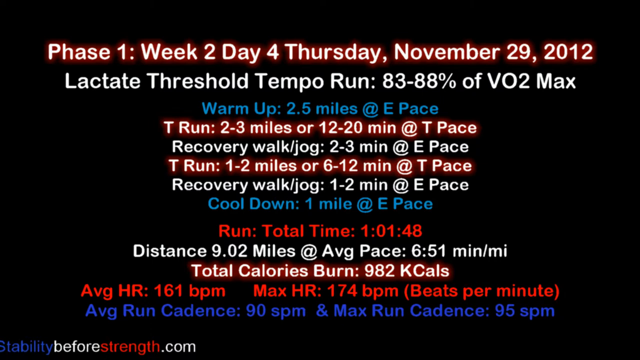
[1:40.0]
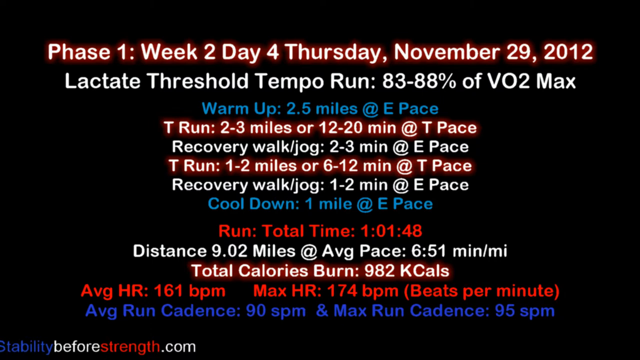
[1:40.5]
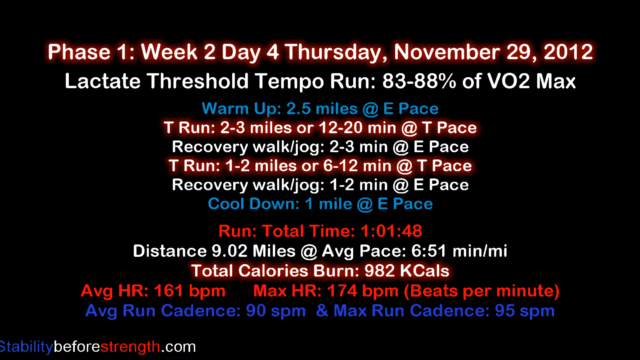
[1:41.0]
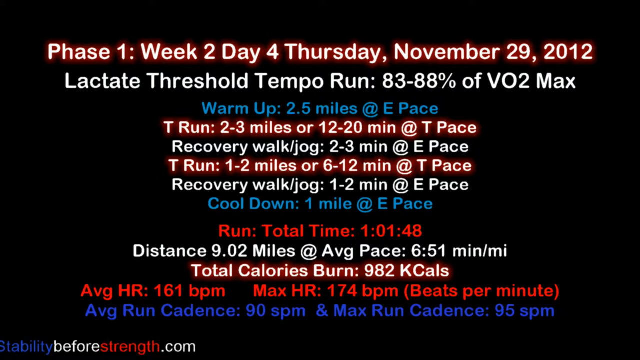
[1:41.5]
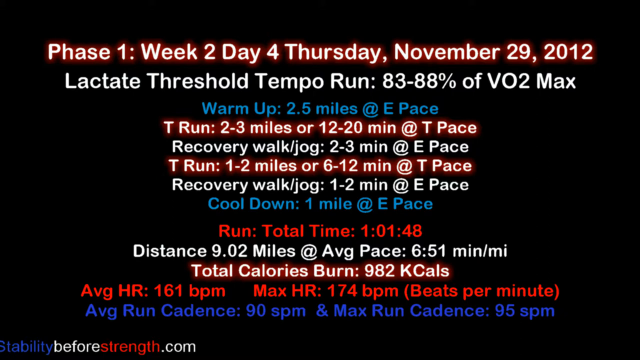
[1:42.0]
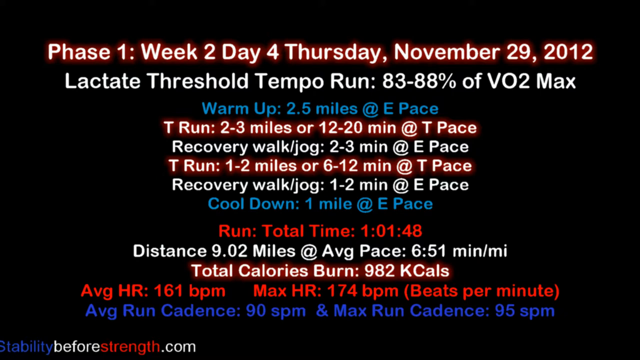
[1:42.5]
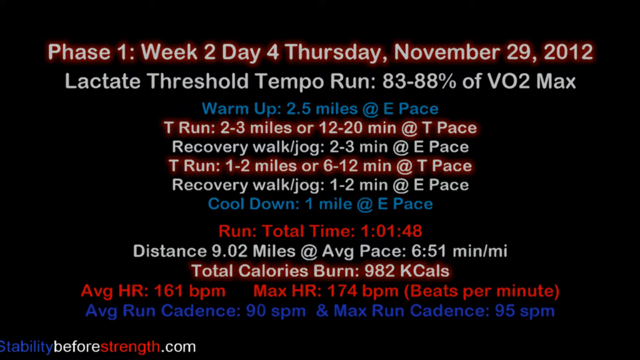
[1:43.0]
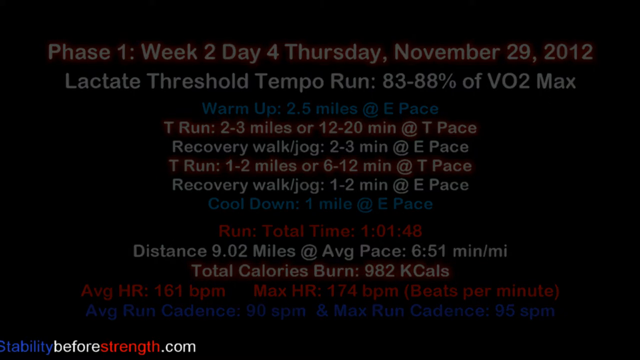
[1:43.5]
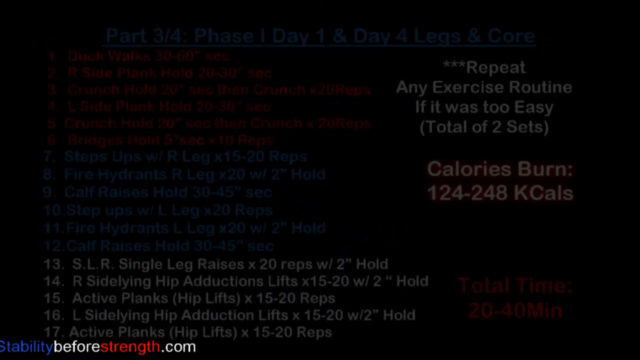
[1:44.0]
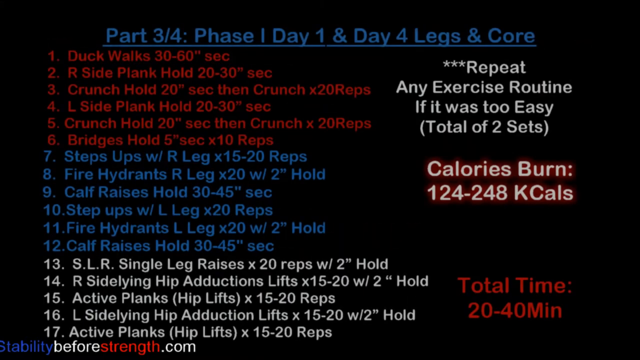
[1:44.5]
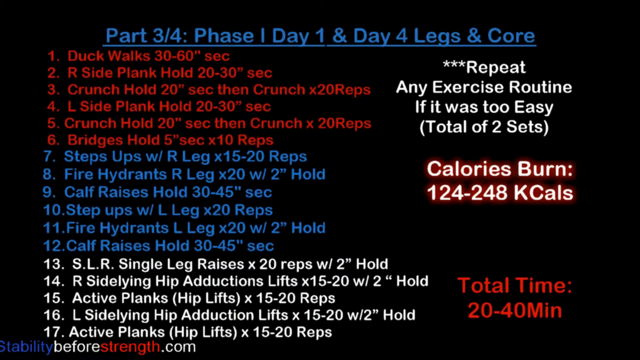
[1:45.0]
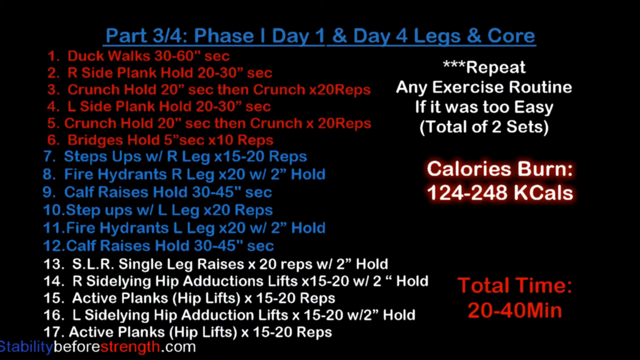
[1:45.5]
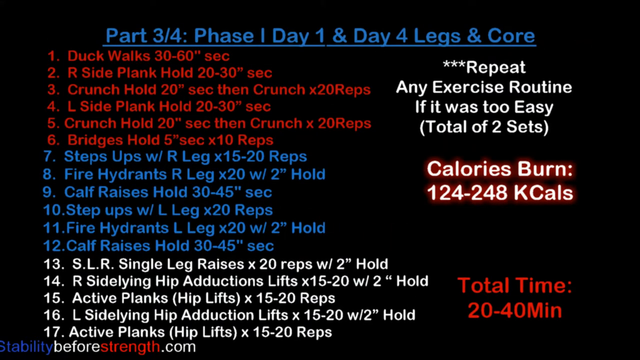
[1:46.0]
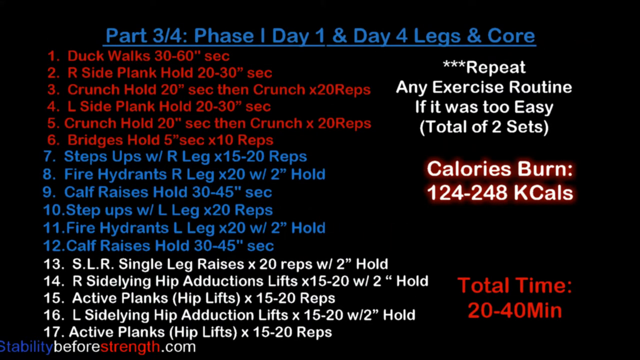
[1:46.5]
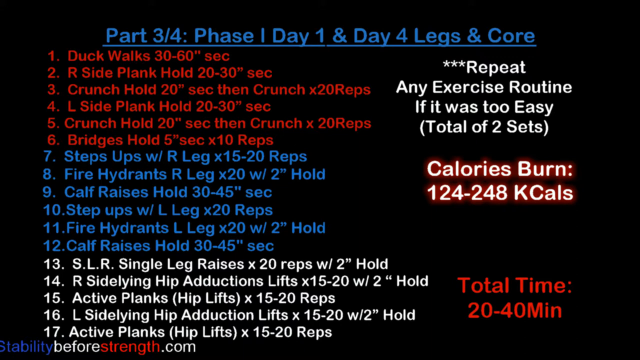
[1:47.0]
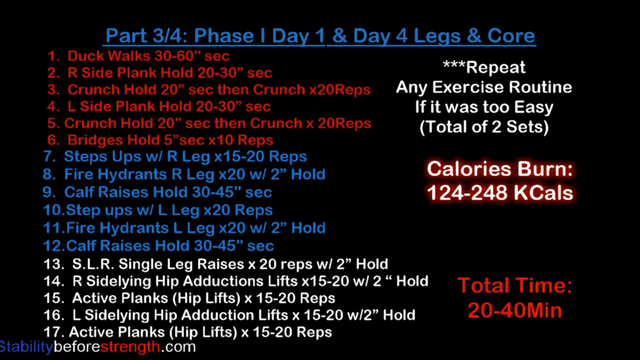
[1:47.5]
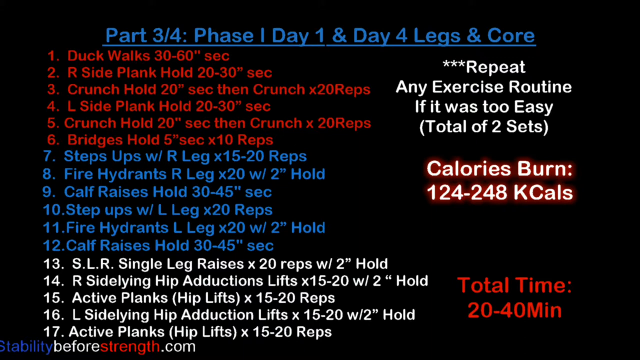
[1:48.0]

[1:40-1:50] The screen fades out to another black screen reading "Part three of four, Phase one, day one and day four, legs and core". In the top right are three asterisks and the text "repeat any exercise routine if it was too easy, total of two sets". Under this, white writing with a red glow says "calorie burn 124 to 248 calories". A list numbered 1 to 17 runs down the page: 1 to 6 in red lettering, 7 to 12 in light blue lettering and 13 to 17 in white. In the bottom left is the same website, stabilitybeforestrength.com, as on the previous screen. In the bottom right, in red lettering bigger than the rest of the text, it says "total time 20 to 40 minutes".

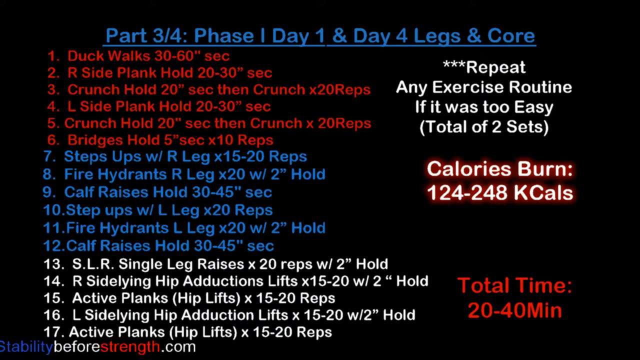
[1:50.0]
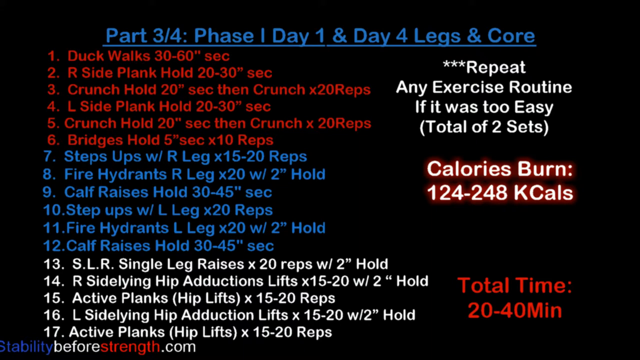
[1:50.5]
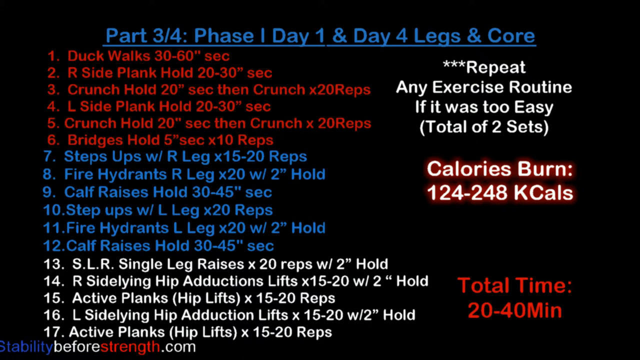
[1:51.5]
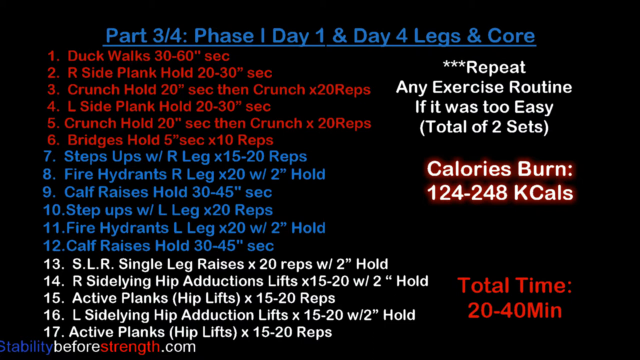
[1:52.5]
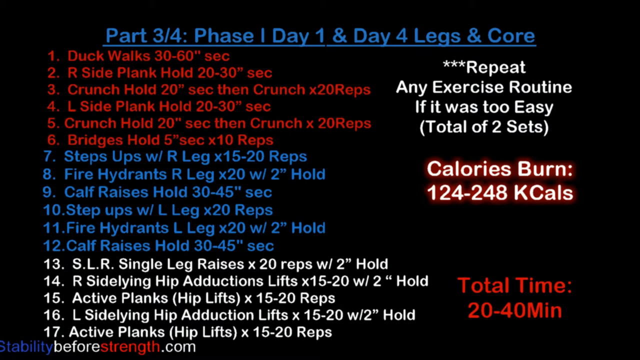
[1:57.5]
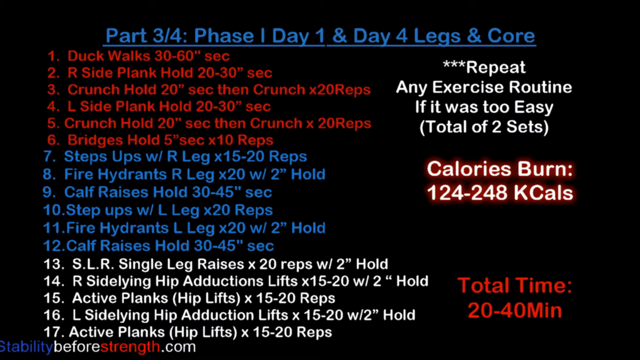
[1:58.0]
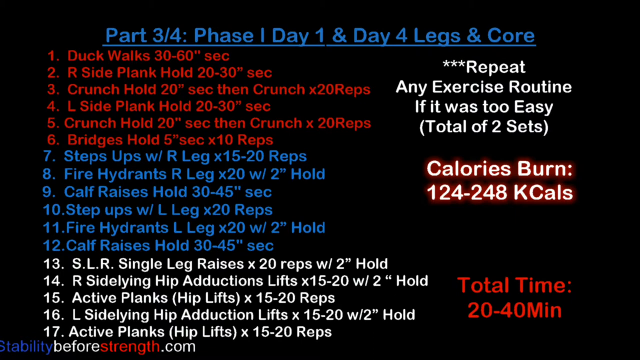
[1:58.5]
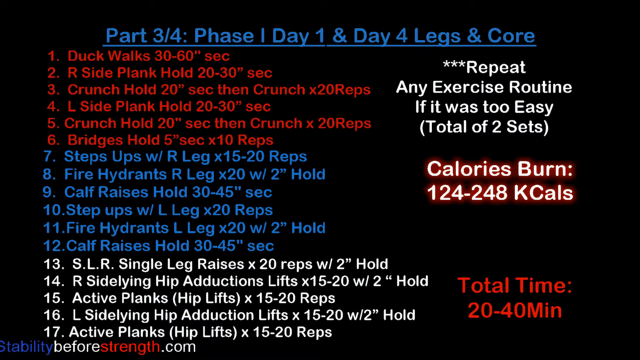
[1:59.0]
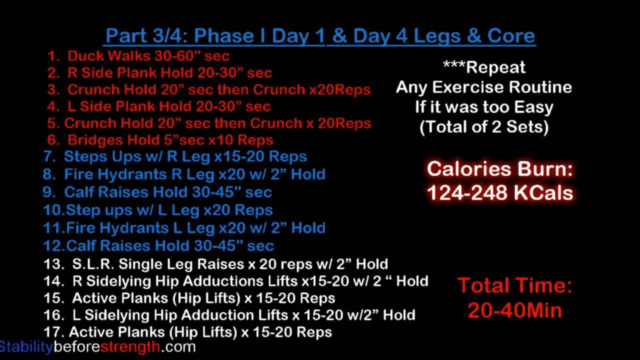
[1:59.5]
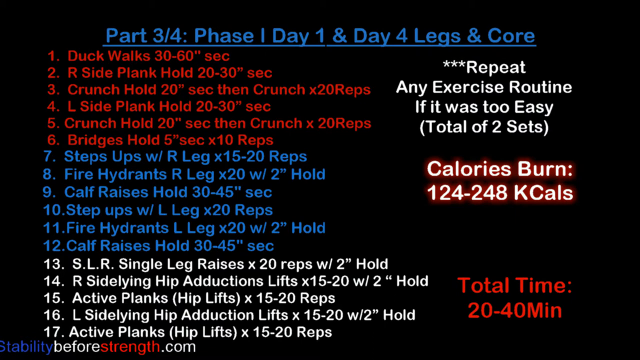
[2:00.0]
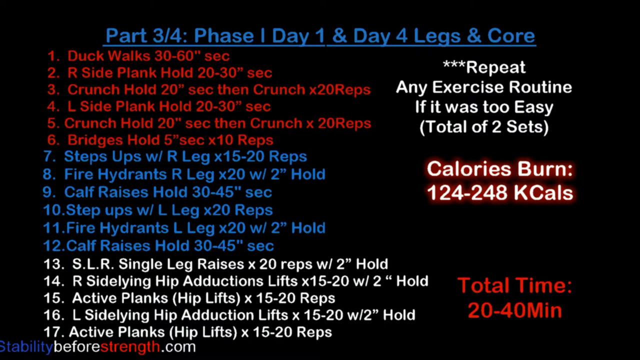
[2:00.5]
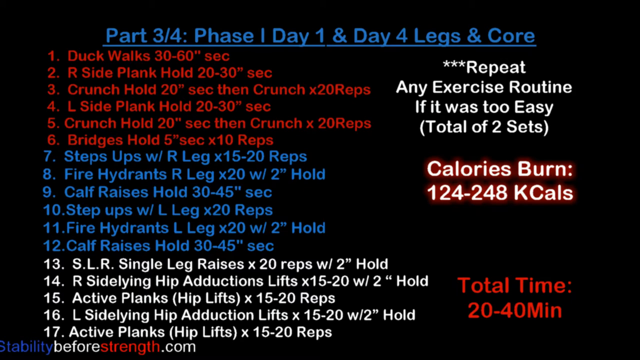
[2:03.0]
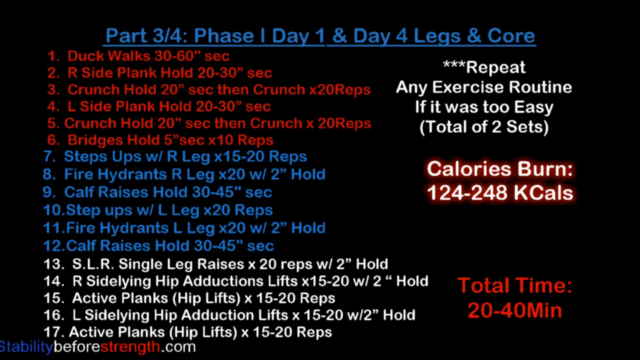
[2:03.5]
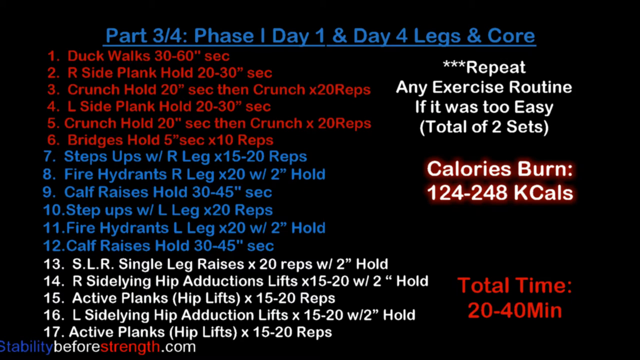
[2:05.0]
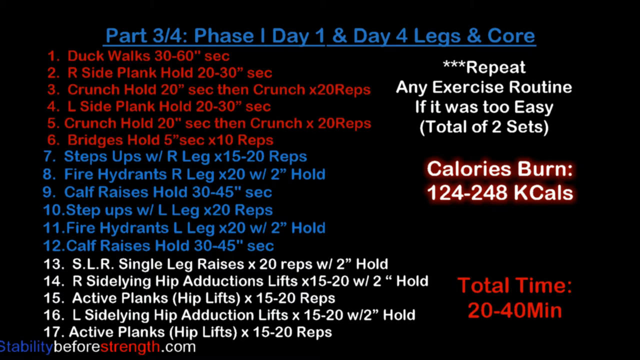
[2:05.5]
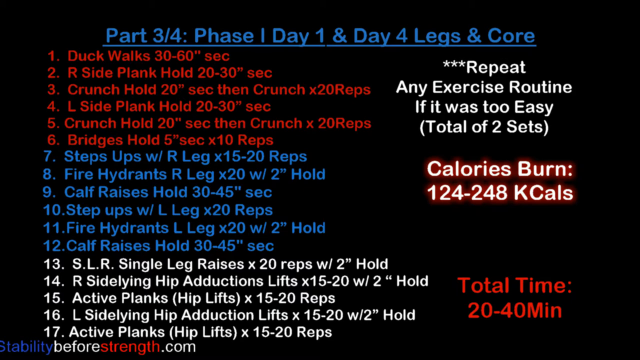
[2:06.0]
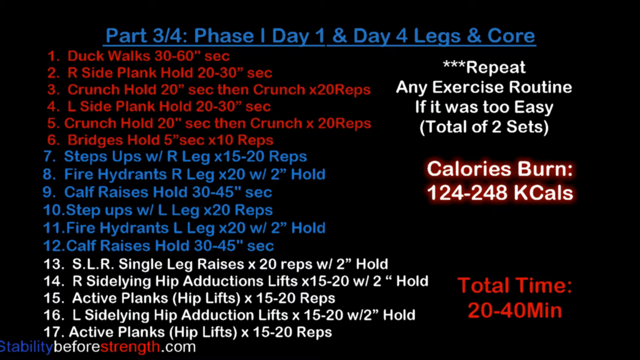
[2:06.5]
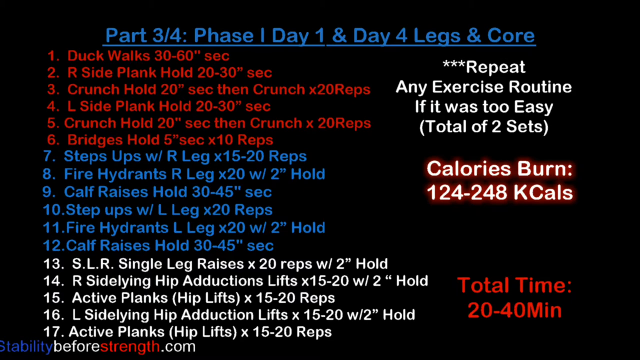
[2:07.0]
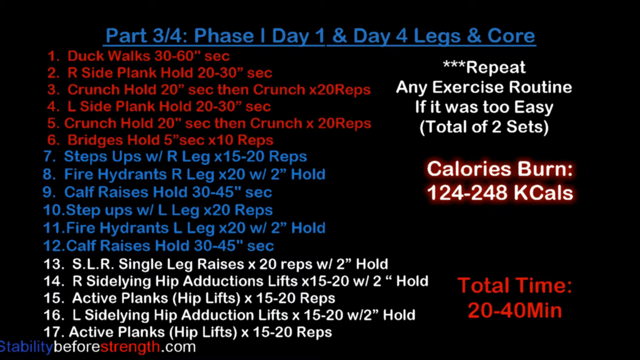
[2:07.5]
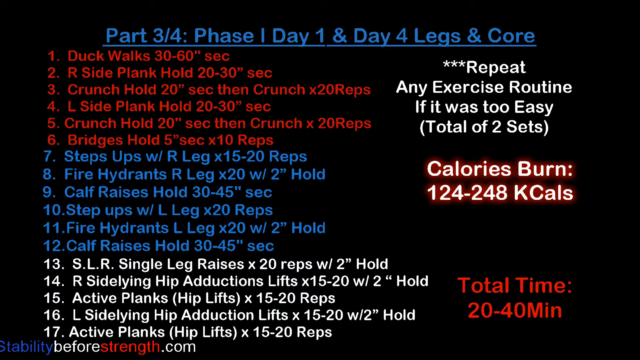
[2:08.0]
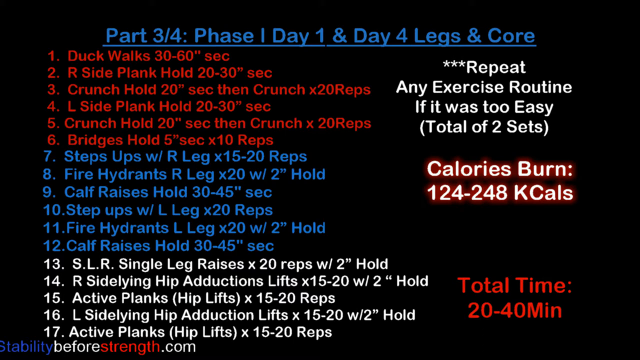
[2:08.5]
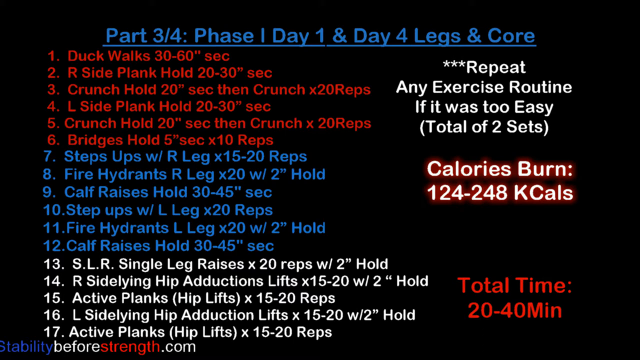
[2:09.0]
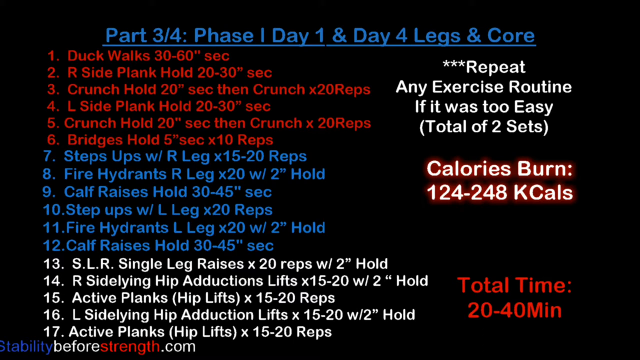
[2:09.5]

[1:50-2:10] The six red exercises are at the top: number one is duck walks for 30 to 60 seconds; number two is R-side plank hold, 20 to 30 seconds; number three is crunch hold 20 seconds, then crunch times 20 reps; number four is L-side plank hold, 20 to 30 seconds; number five is crunch hold 20 seconds, then crunch 20 reps; and number six is bridges, hold 5 seconds times 10 reps. Underneath are the six blue exercises: number seven is step ups with right leg, 15 to 20 reps; number eight is fire hydrants with the right leg, 20 reps with a two second hold; number nine is calf raises, hold 30 to 45 seconds; number 10 is step ups with left leg, 20 reps; number 11 is fire hydrants left leg, 20 with a two second hold; and number 12 is calf raises, hold 30 to 45 seconds.